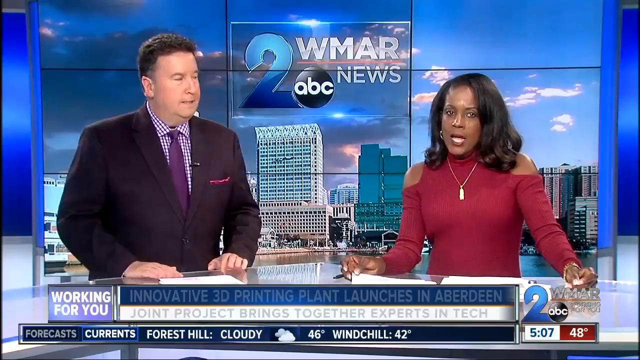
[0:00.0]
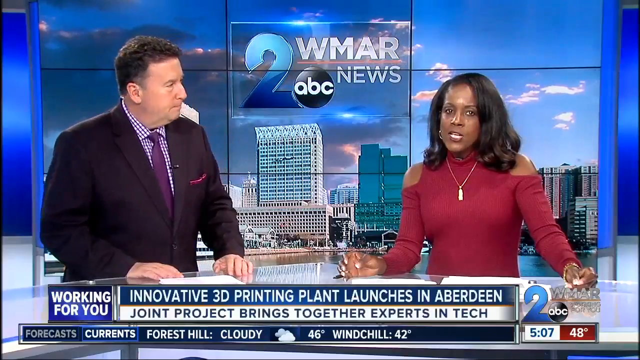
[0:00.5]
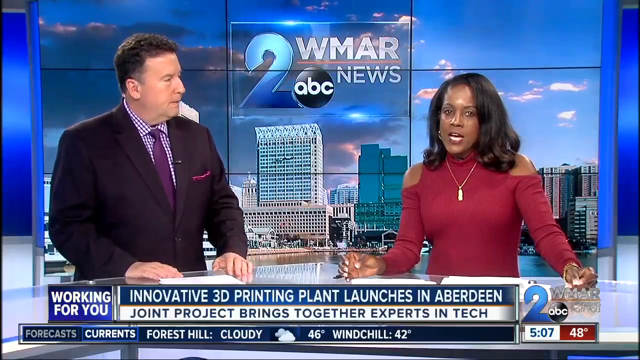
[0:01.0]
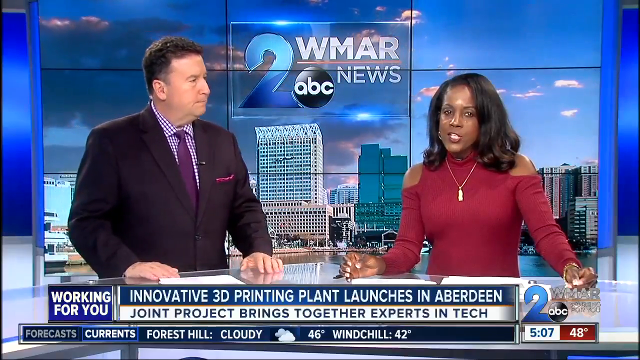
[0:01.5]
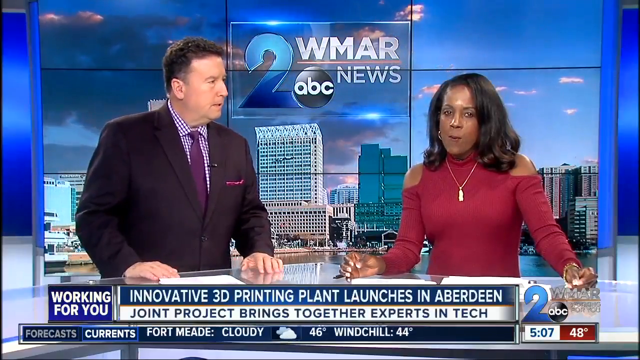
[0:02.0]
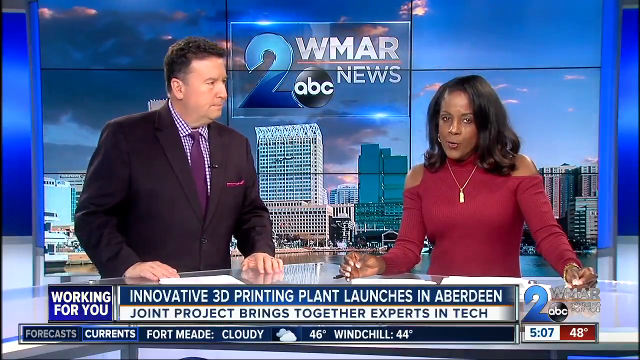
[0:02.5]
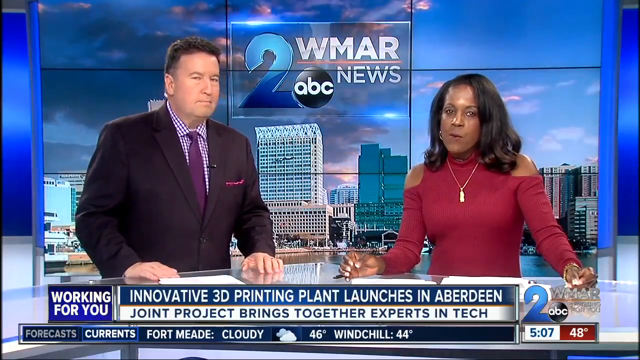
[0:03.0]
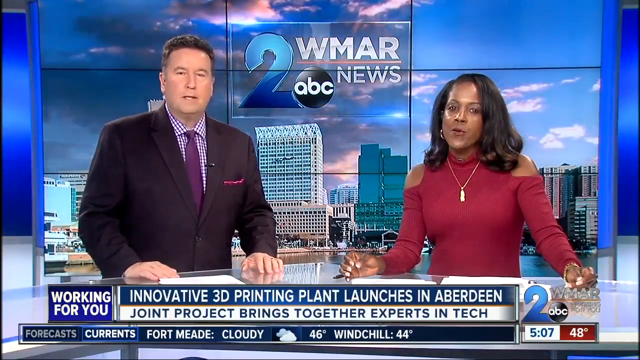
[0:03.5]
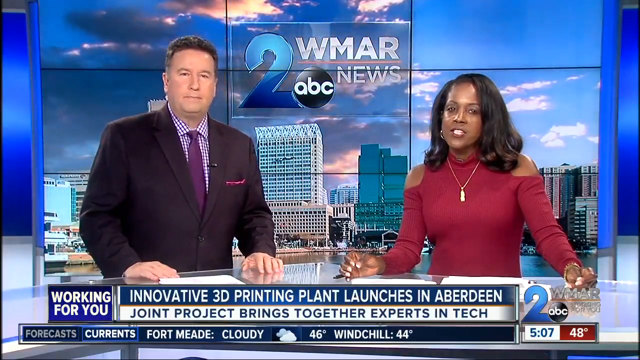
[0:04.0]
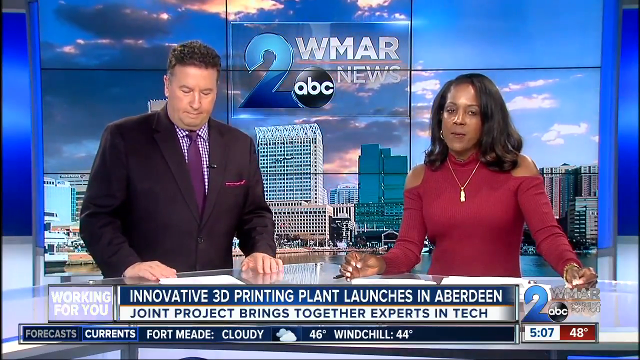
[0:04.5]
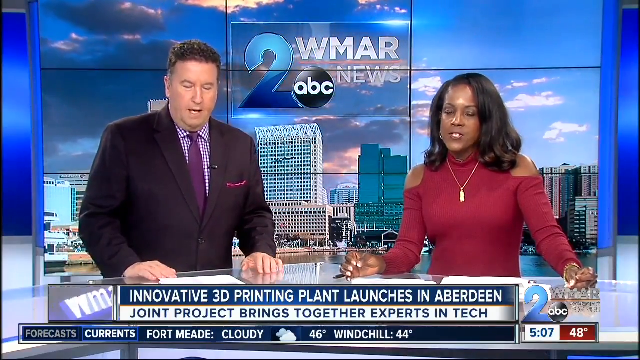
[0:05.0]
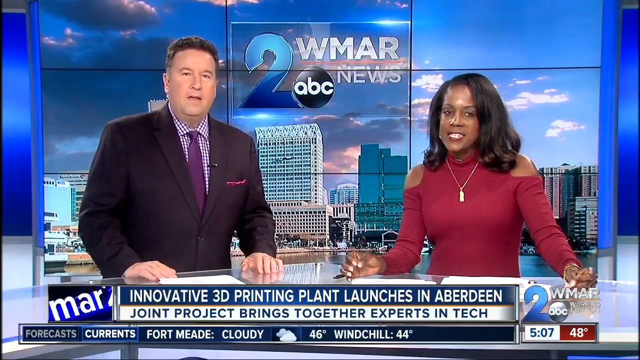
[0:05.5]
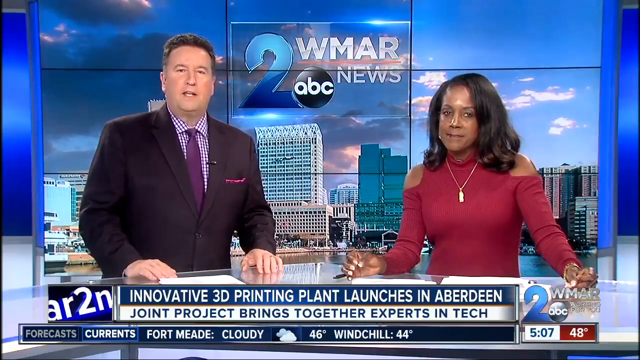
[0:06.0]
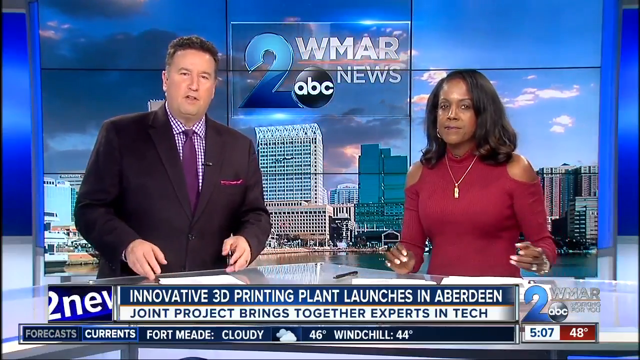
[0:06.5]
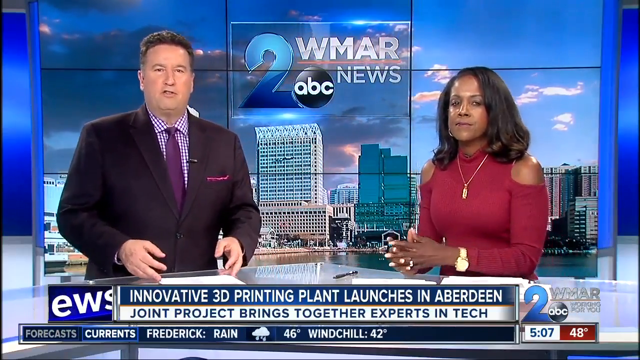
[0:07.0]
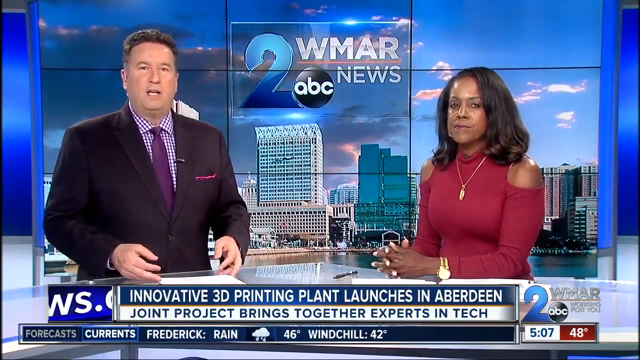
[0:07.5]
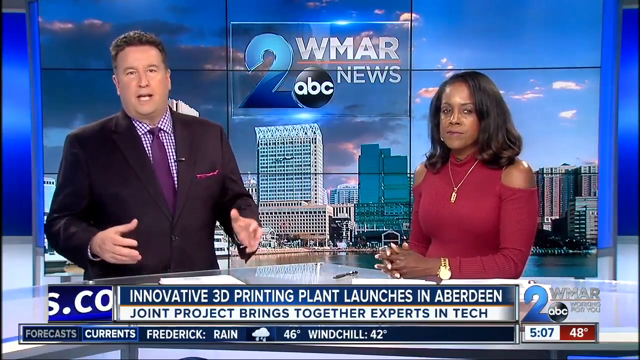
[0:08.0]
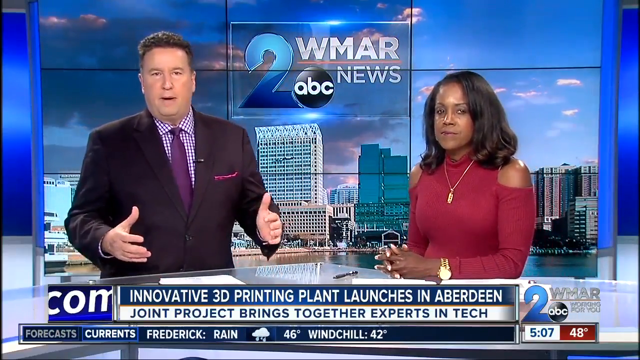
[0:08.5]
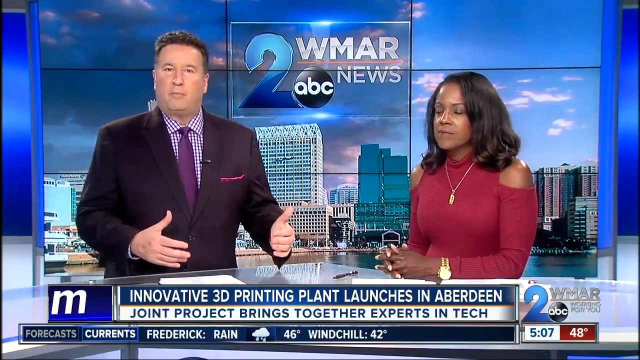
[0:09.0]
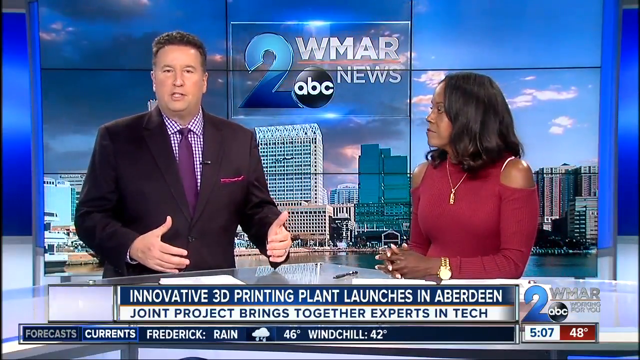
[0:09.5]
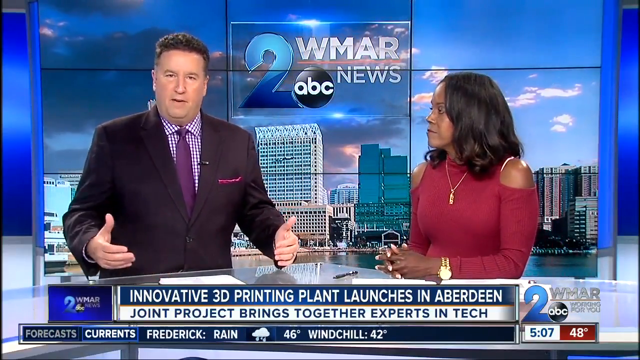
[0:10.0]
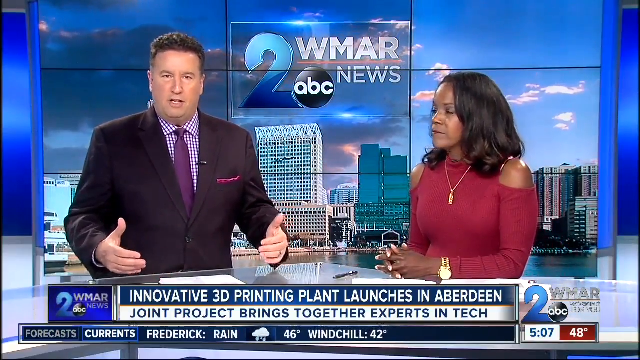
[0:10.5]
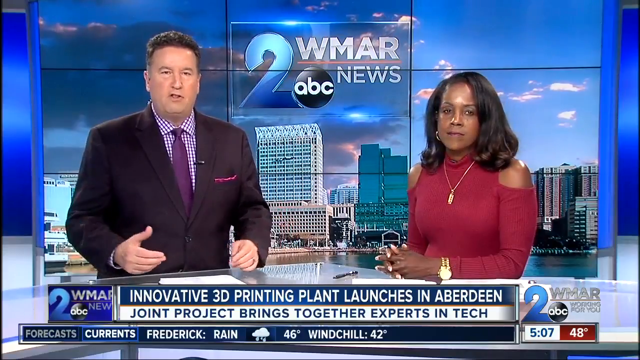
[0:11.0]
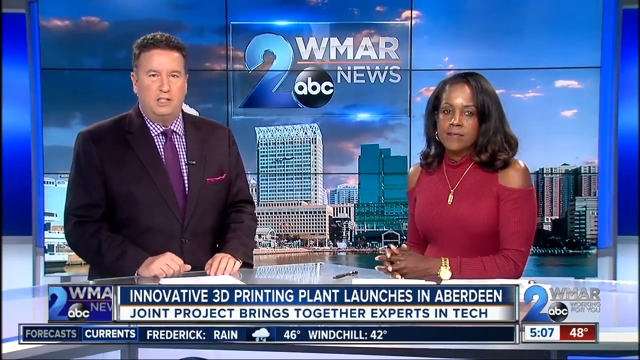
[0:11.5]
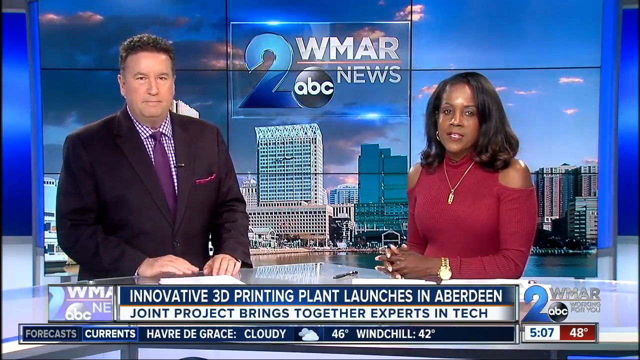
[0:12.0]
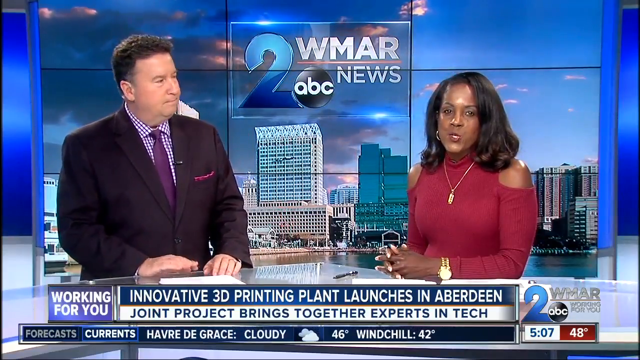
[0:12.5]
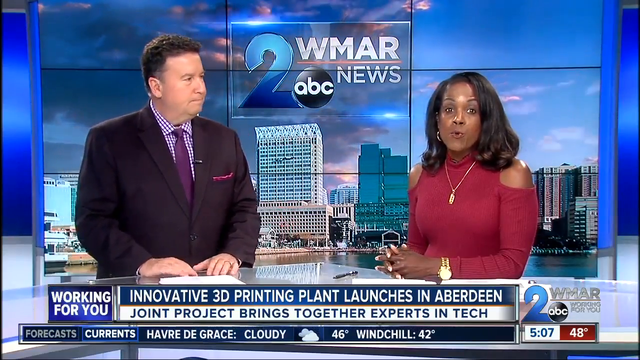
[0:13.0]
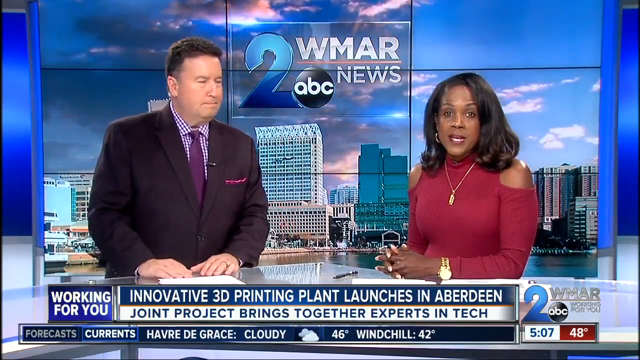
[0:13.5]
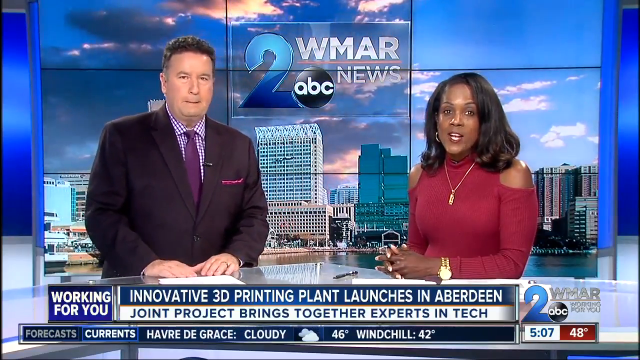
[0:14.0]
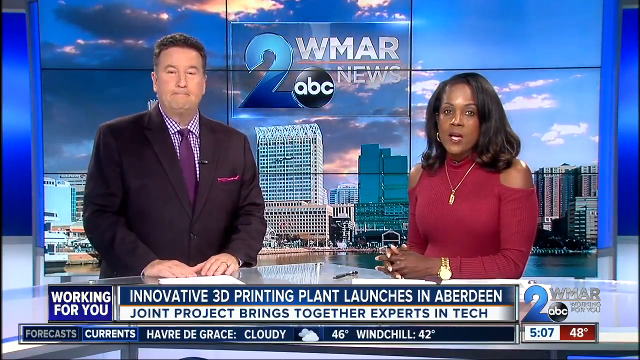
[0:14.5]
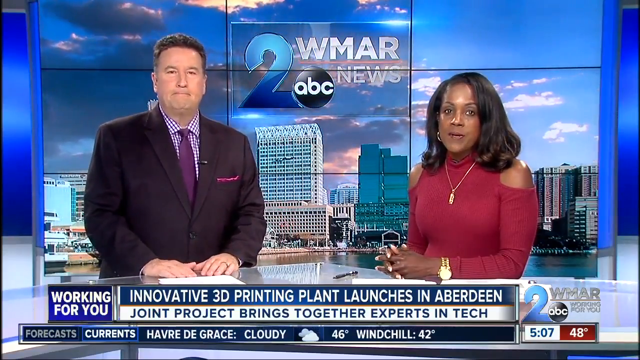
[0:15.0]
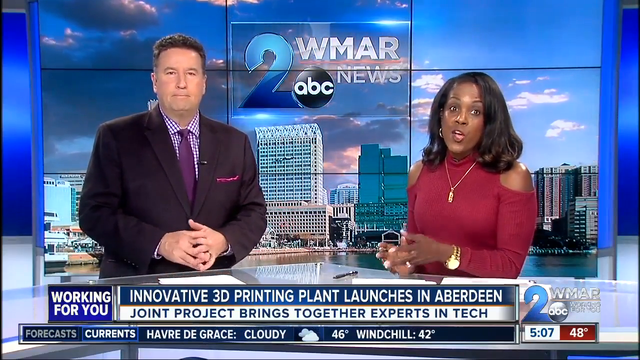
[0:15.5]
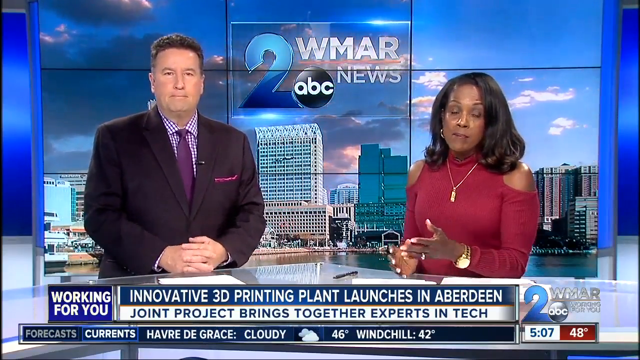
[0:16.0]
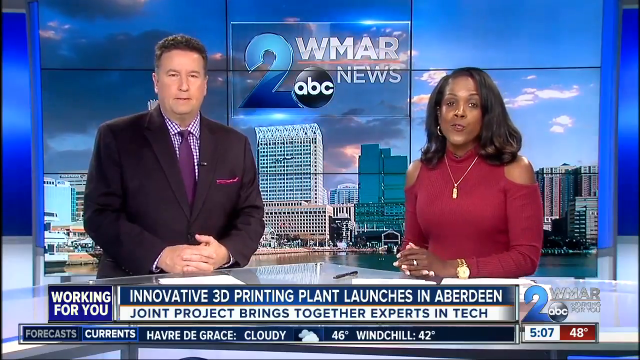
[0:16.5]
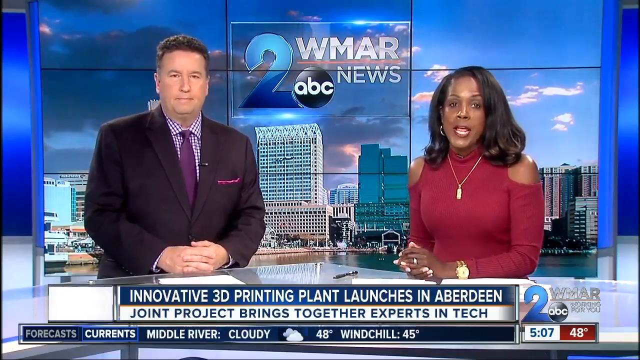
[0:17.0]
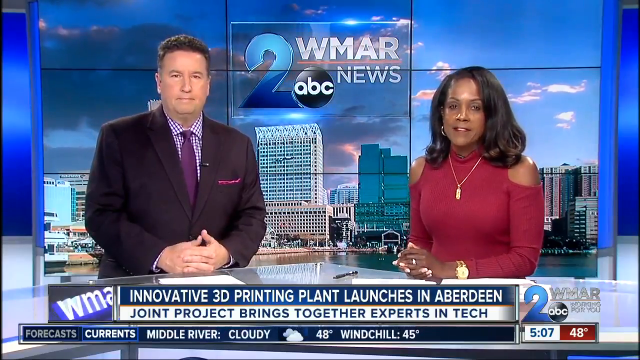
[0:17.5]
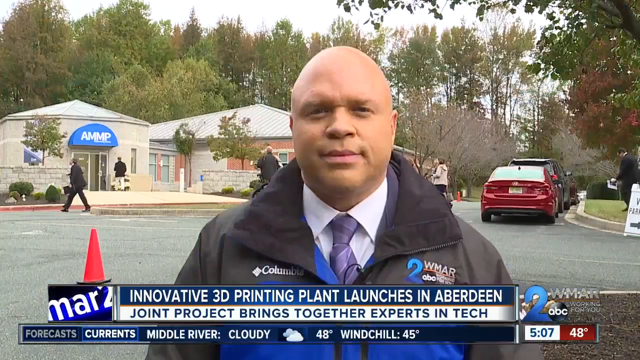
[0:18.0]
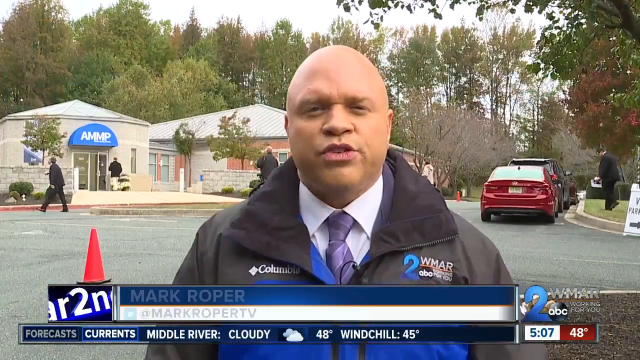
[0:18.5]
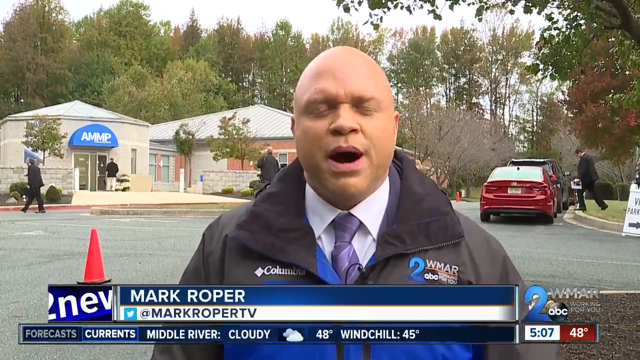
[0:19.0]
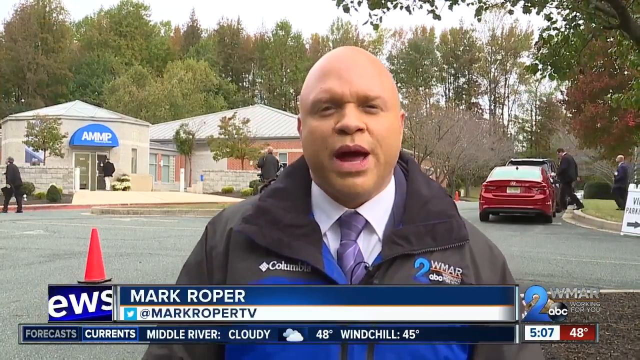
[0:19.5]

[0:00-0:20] Two newscasters sit in the studio newsroom of Channel 2 news, with the skyline behind them. The ticker reads "innovative 3d printing plant launches in Aberdeen", and a weather forecast for the day is shown, with forty-six degrees for the high and a windchill of 42 degrees. The woman wears a burgundy fitted dress and the man wears a business suit; they speak to the camera and also look at each other. The video transitions to Mark Roper in the field, outside a single-story building in the daytime, where people move about their normal activities. A blue awning on the building bears the letters A-M-M-P. A line of trees is in the background, orange cones are in the parking lot, cars are parked, and white signs with arrows direct traffic. Mark is bald and wears a WMAR Channel 2 ABC rain jacket over a suit jacket, a collared shirt and a necktie. He speaks to the camera in a matter-of-fact way.